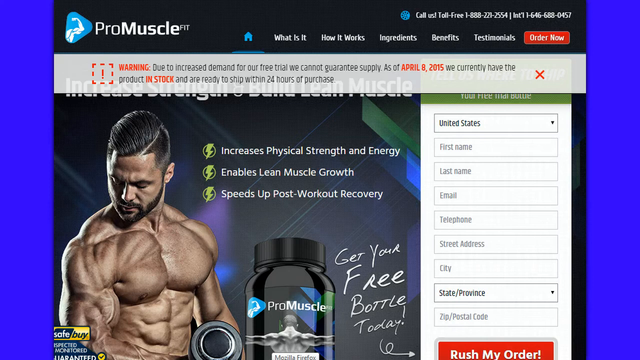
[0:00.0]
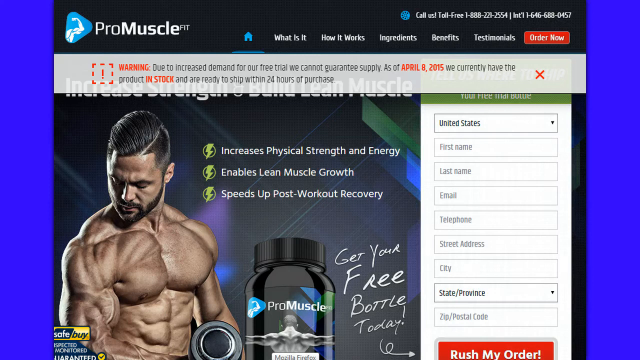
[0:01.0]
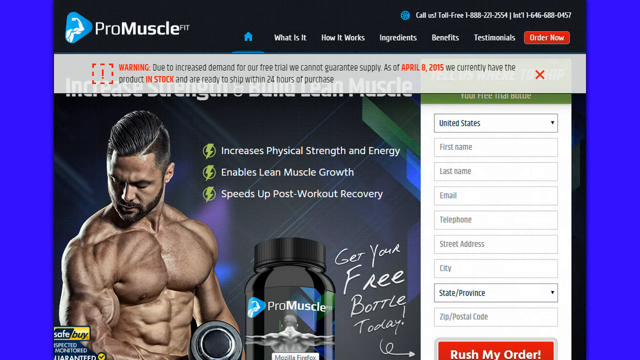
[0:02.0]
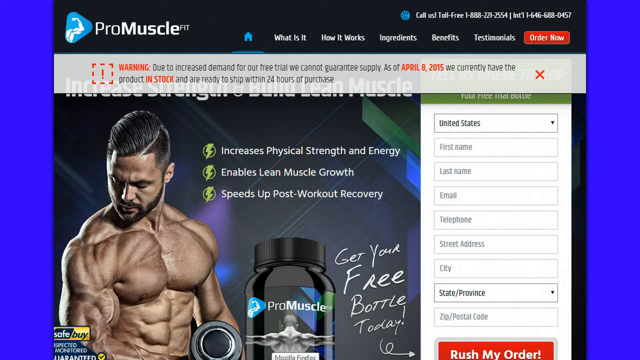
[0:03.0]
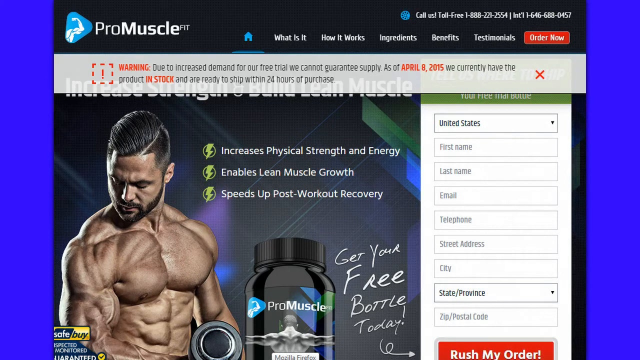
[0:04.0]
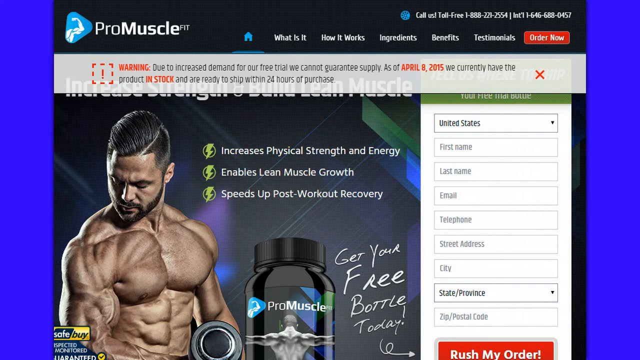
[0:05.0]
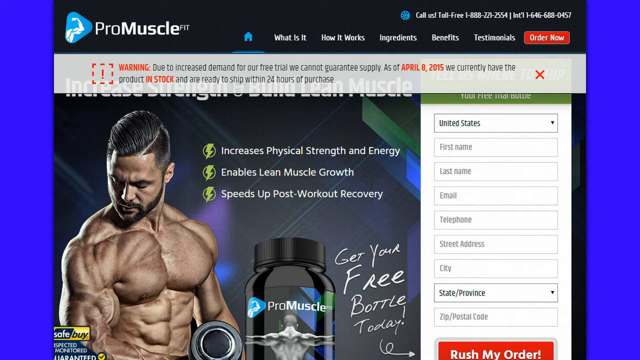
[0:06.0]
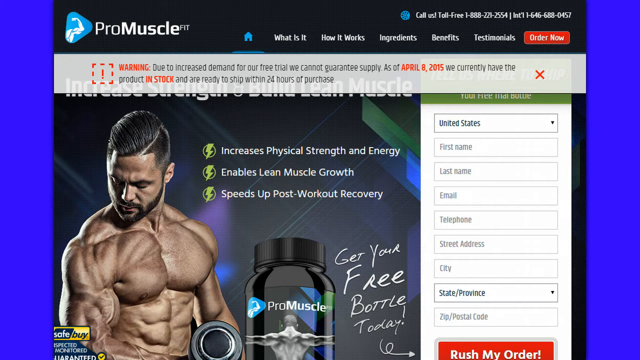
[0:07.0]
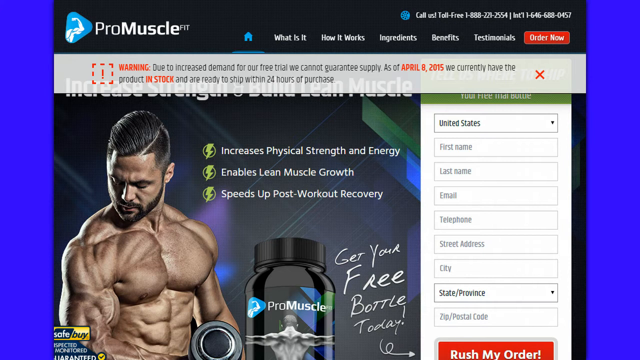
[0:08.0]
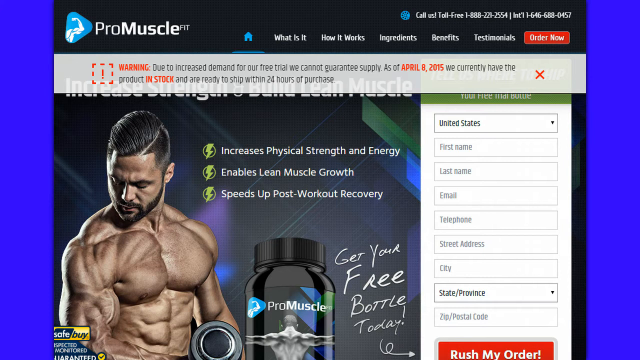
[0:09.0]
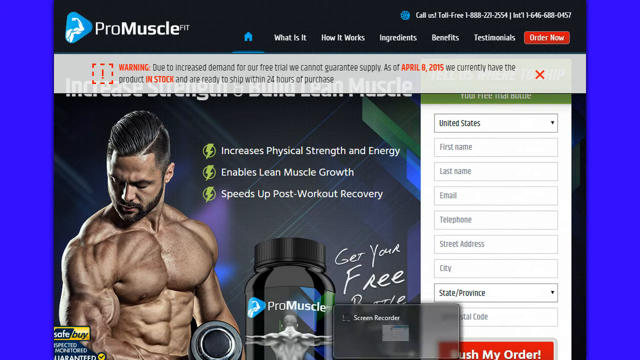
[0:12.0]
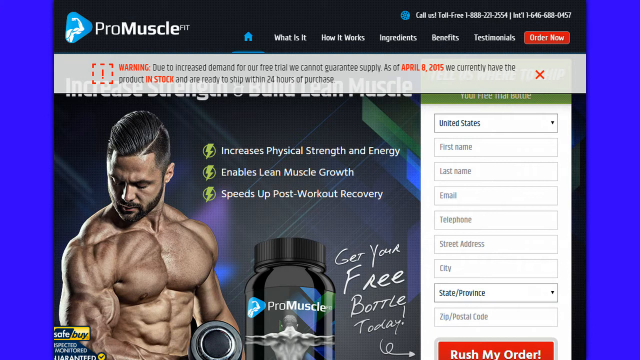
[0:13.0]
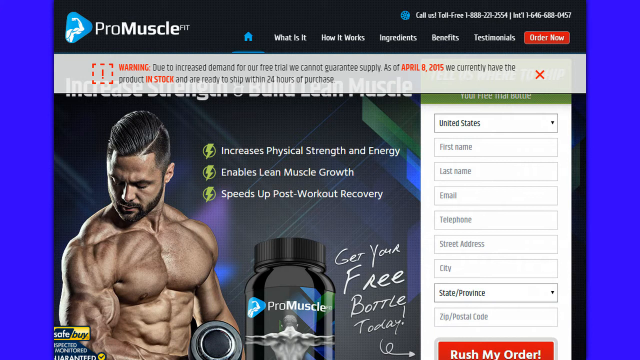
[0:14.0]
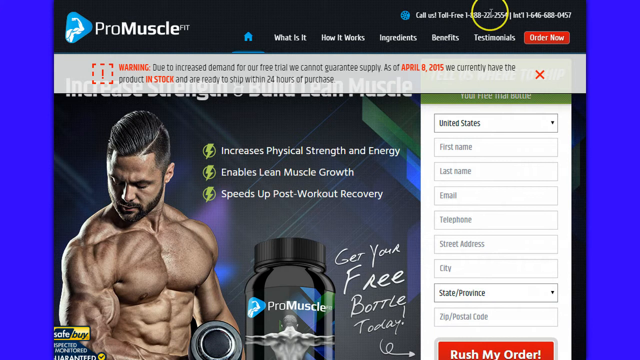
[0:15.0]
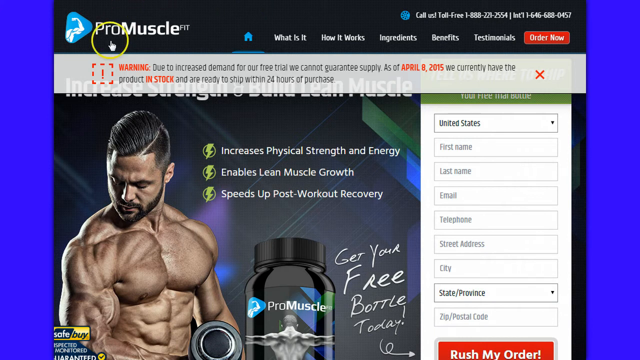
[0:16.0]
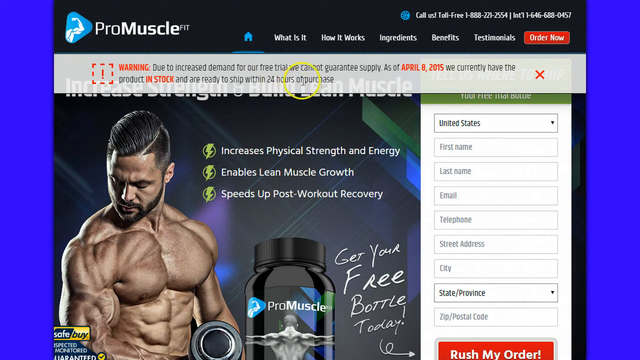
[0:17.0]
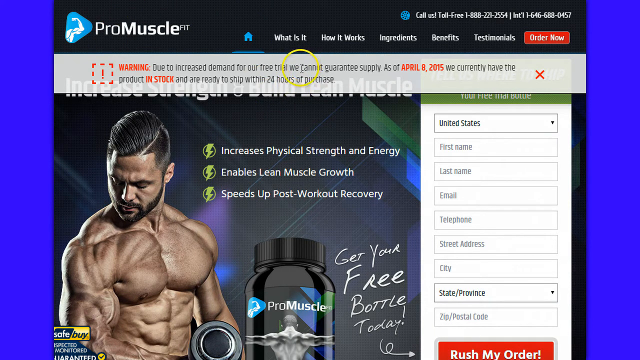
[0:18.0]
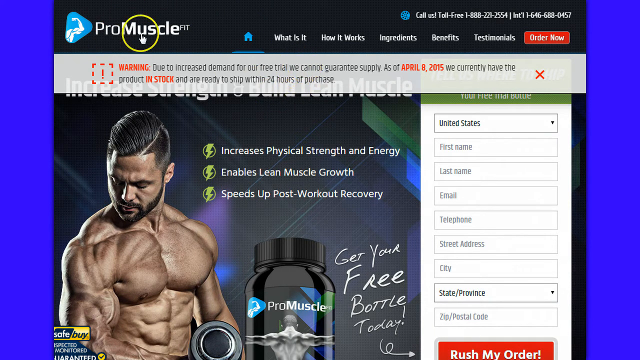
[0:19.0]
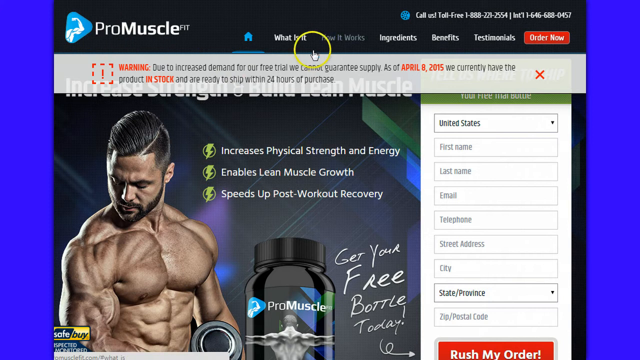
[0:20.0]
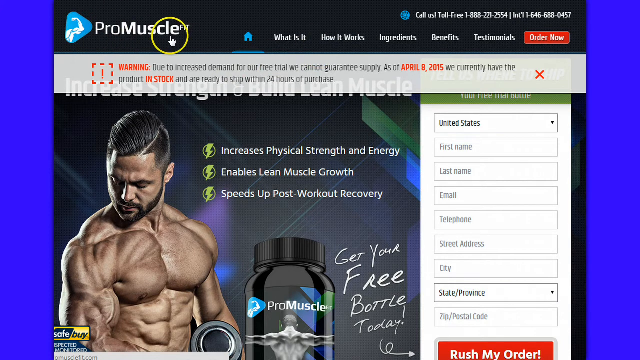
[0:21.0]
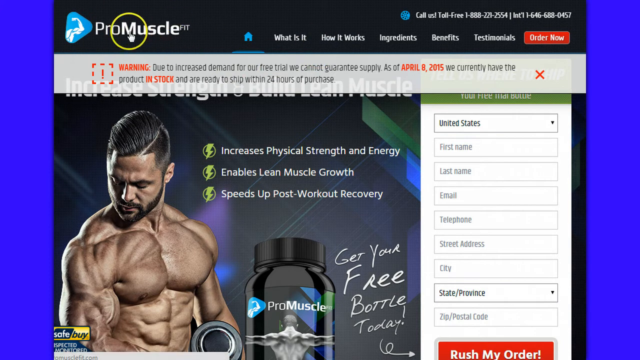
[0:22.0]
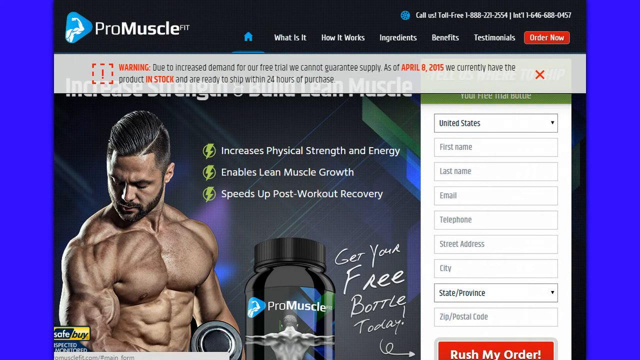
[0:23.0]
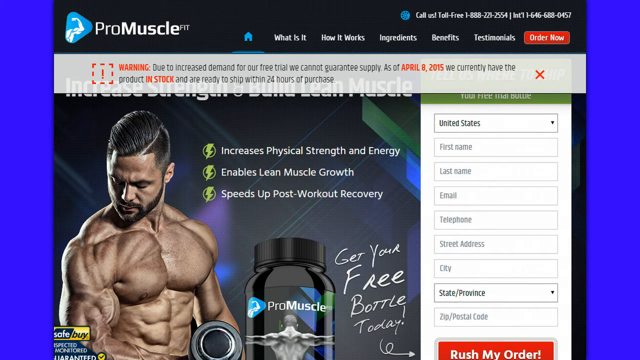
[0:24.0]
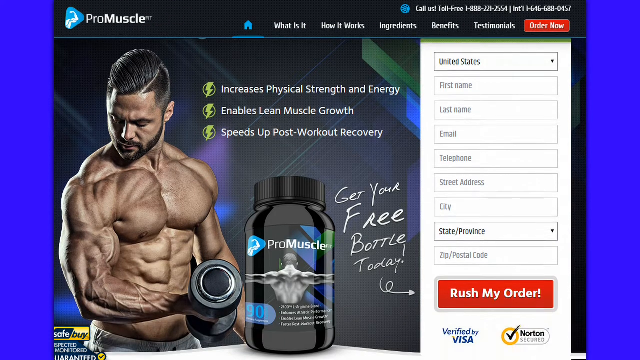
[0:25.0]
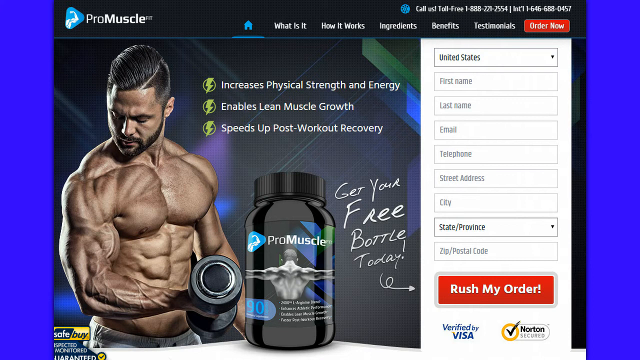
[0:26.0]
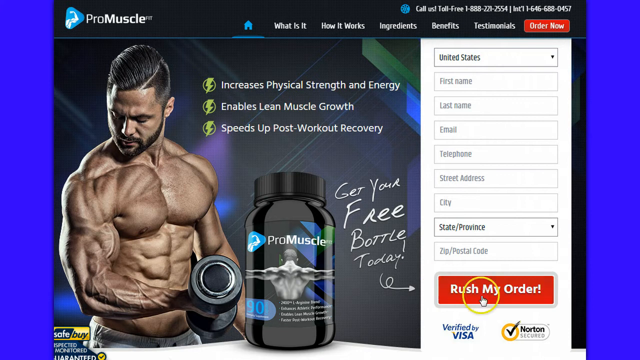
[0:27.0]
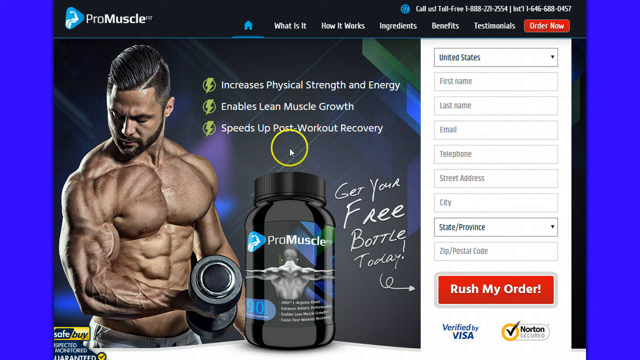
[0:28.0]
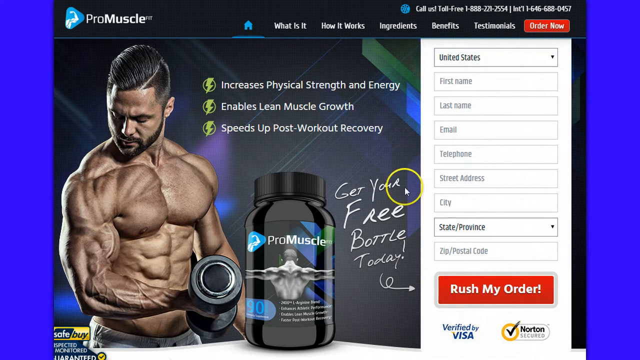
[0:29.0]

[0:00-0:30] A page is open on a computer with "Pro Muscle" at the top. There is a sort of digital picture of a man with a lot of muscles. The page has a form for entering a first name, last name, email and telephone number, and it says "you can get your free bottle today." A red area to click on reads "rush my order." The cursor is a yellow circle, and the person moving it swings it roughly in a circular pattern around the areas that say "increase physical strength and energy," "enables lean muscle growth" and "speeds up post-workout recovery." These are in the middle of the page next to what looks like a green circle with a green lightning bolt inside. A toll-free phone number is at the top, and there is a home button to click on. A warning at the top reads: "due to increased demand for our free trial, we cannot guarantee supply. As of April 8th, 2015, we currently have the product in stock and are ready to ship within 24 hours of purchase."